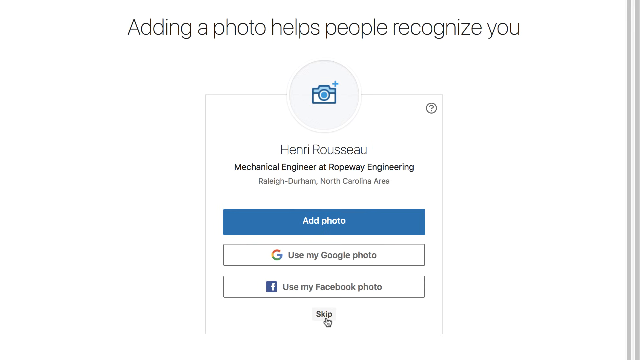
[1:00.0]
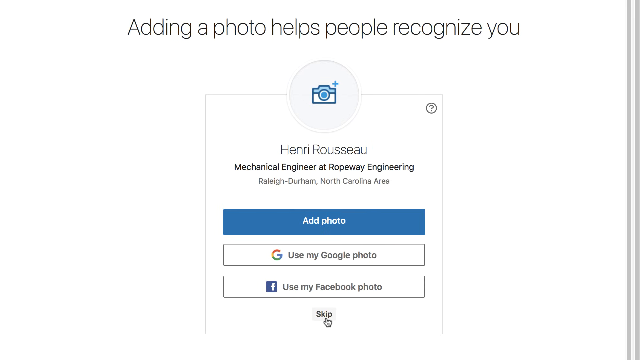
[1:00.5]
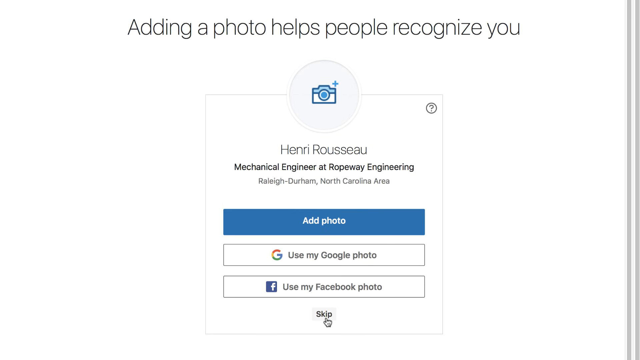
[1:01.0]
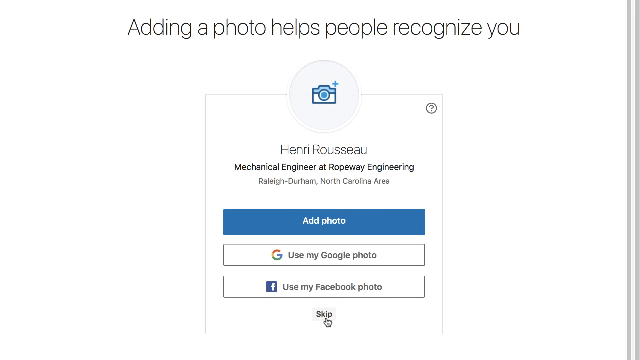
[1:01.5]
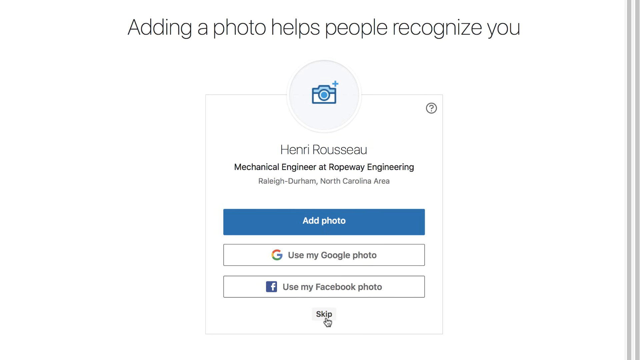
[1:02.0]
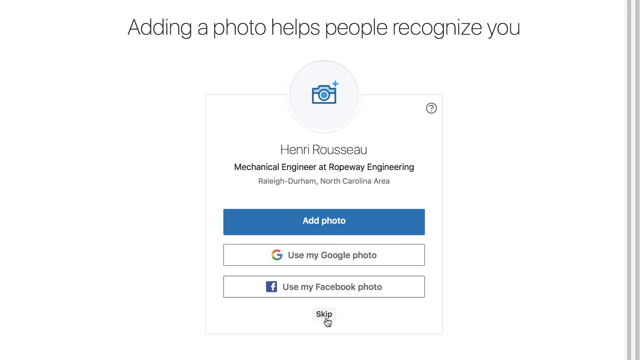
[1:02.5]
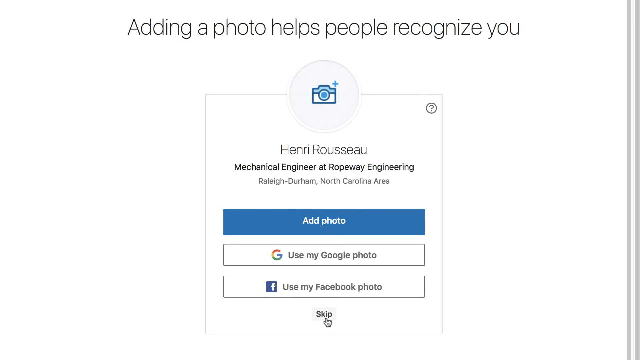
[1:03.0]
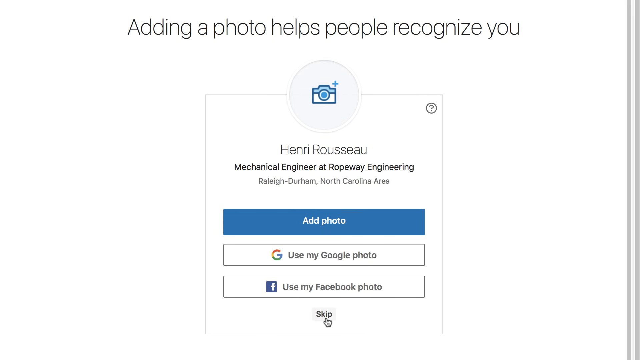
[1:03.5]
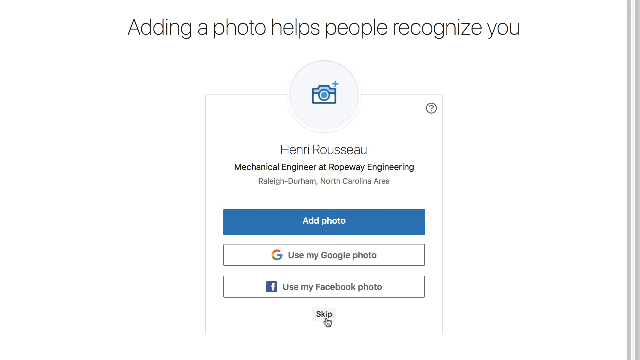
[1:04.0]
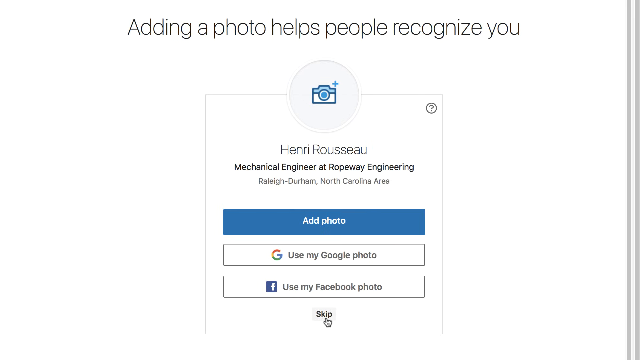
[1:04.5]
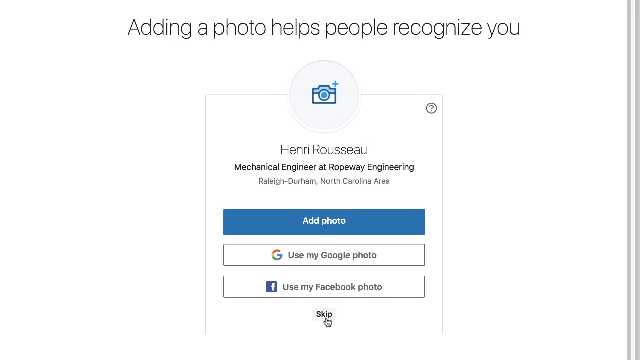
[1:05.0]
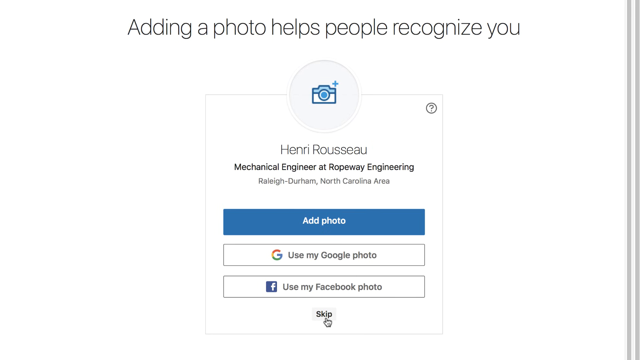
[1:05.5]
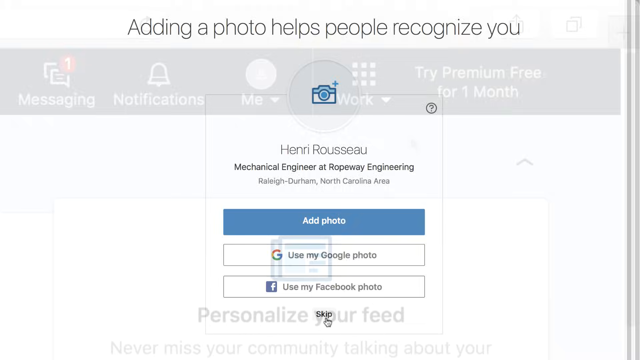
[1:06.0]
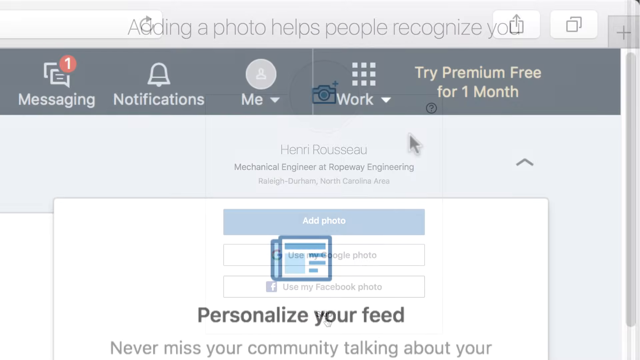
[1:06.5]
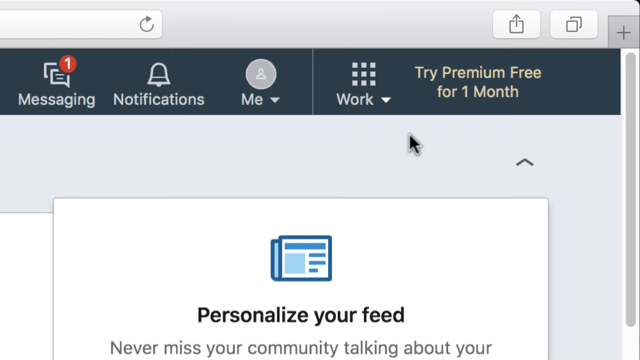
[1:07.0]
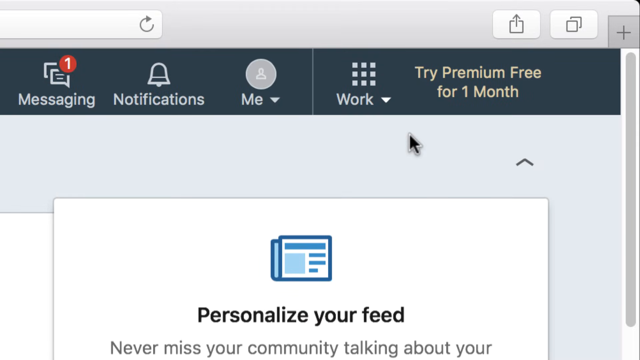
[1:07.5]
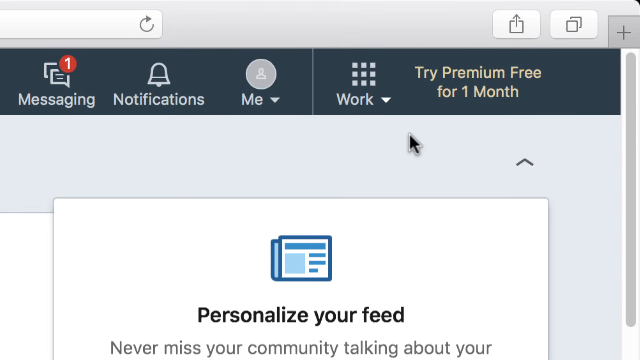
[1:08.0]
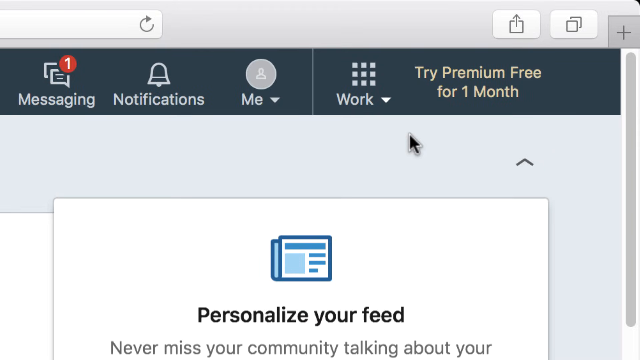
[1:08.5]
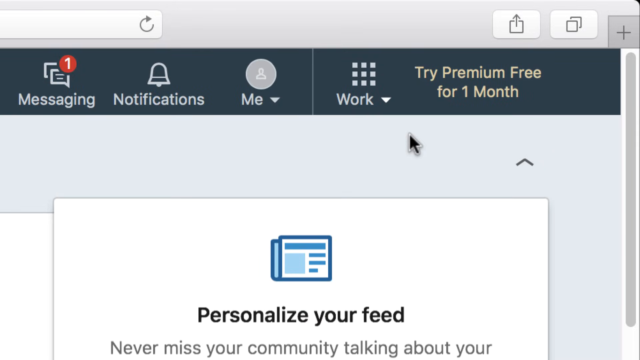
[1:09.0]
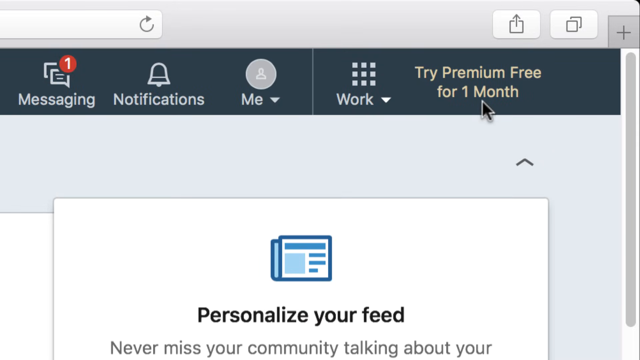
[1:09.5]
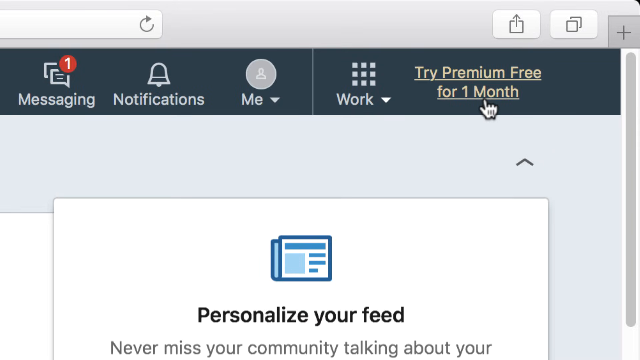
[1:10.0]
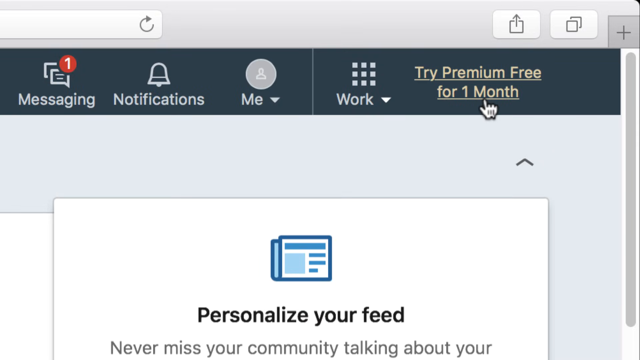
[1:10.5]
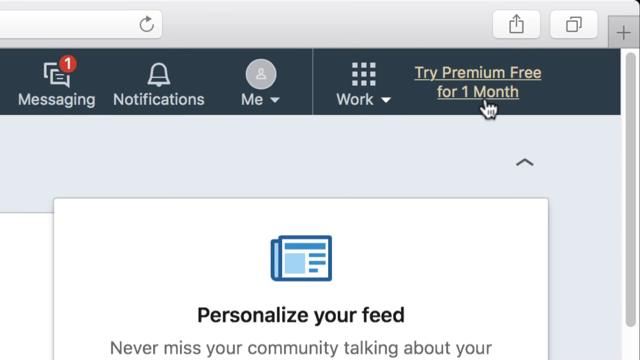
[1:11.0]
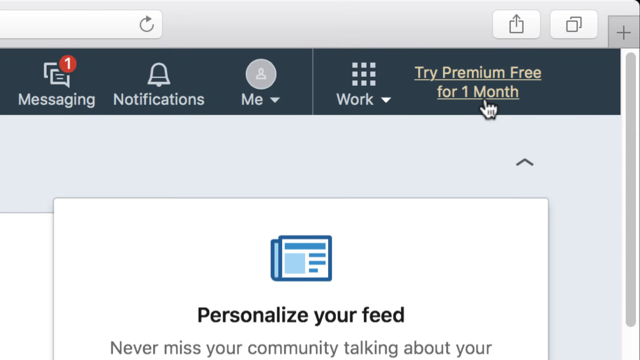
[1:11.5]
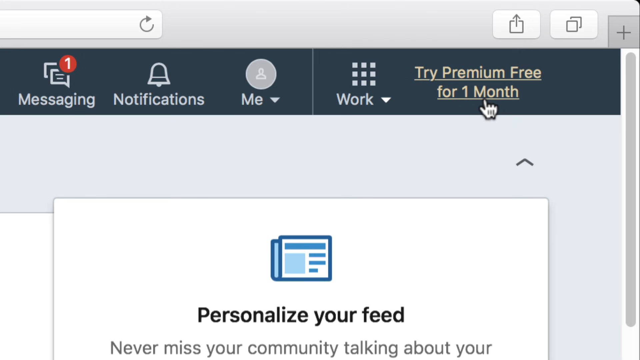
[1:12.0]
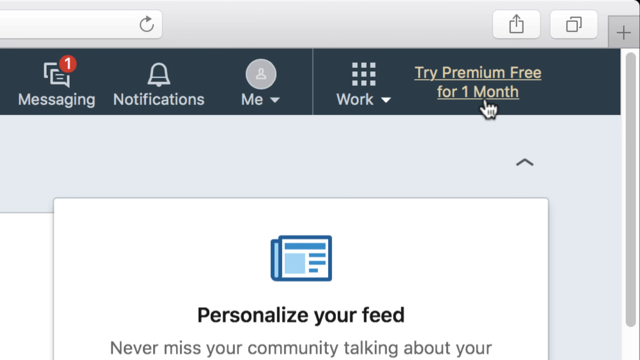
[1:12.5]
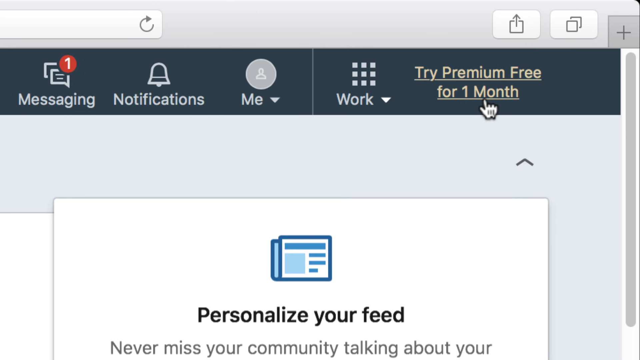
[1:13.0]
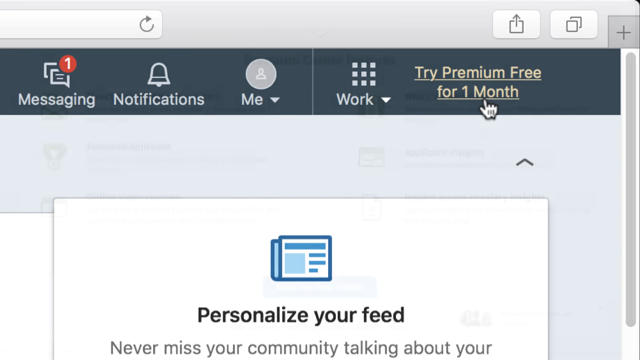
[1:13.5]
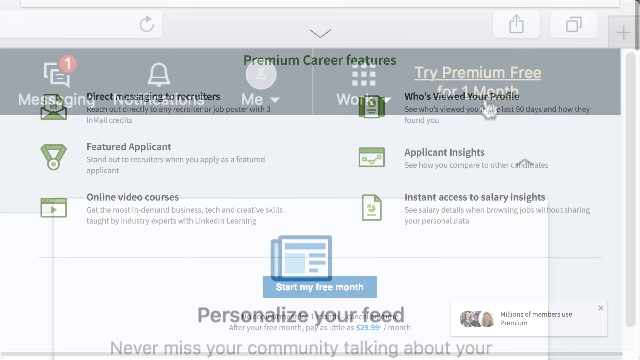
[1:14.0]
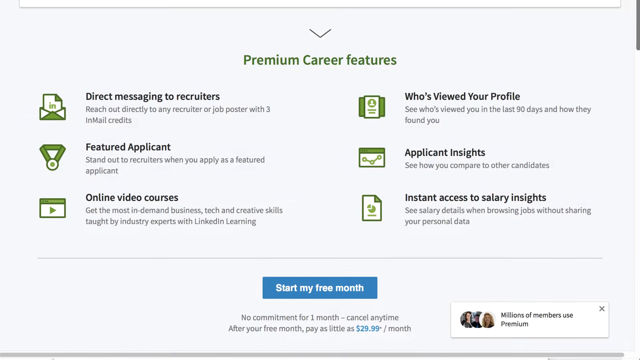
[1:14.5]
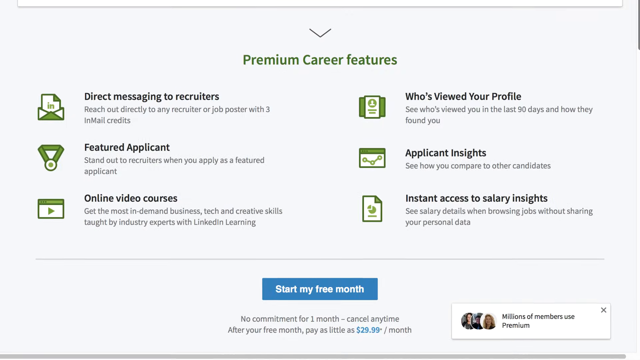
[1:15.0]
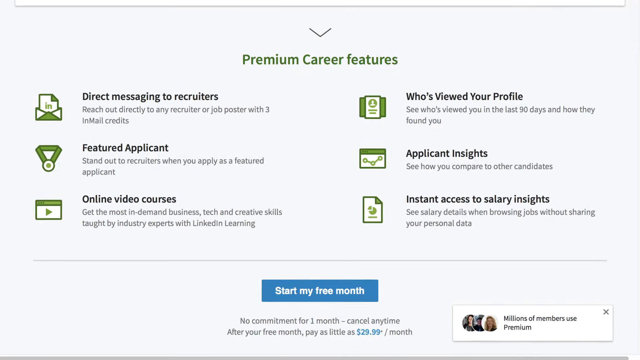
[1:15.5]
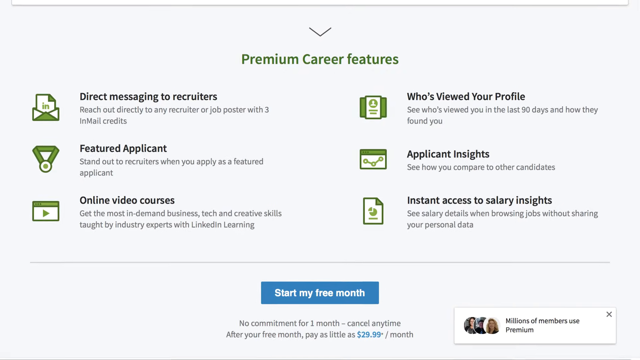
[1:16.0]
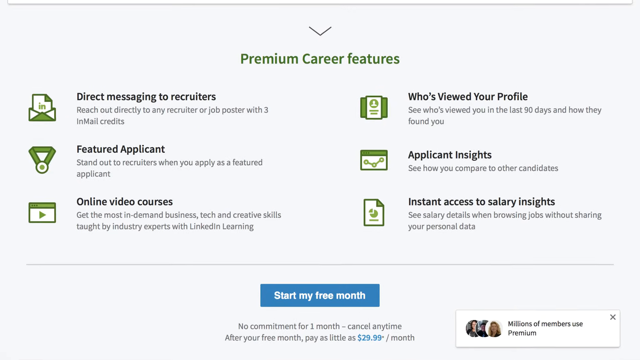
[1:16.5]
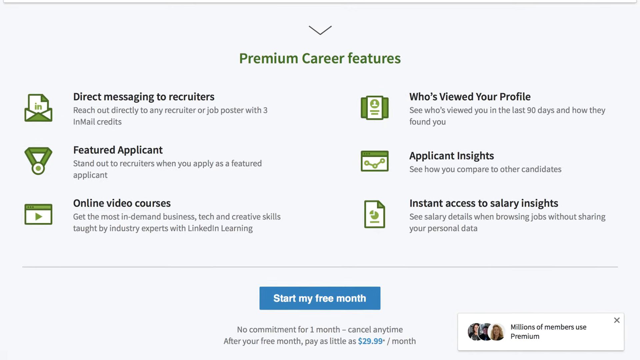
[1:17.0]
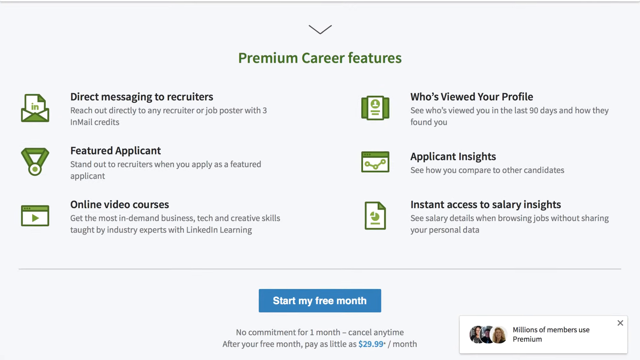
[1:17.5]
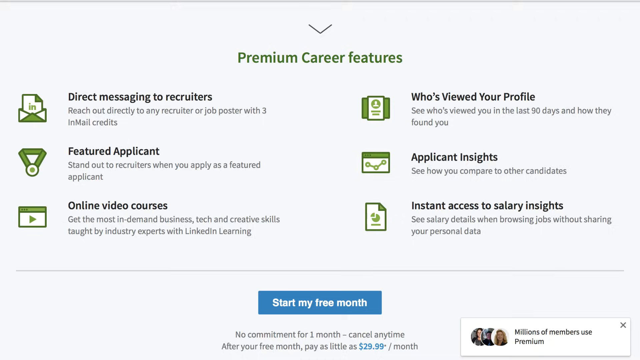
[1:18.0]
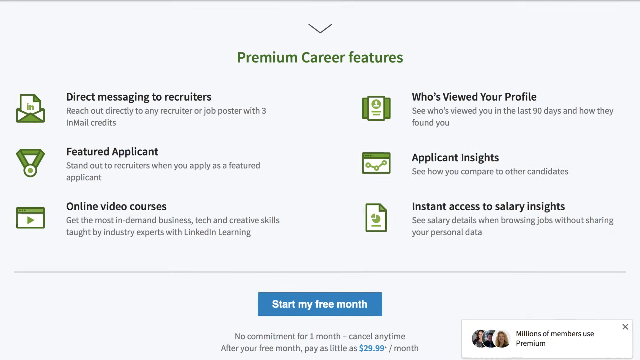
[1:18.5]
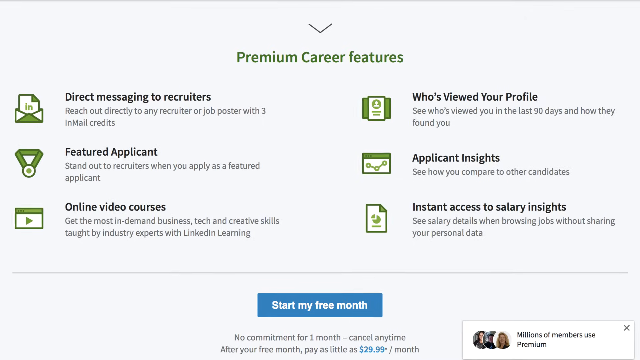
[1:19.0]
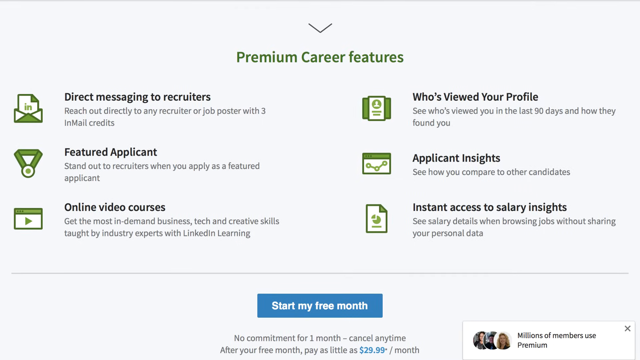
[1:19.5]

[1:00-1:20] A prompt to add a photo is shown, saying it helps others recognize the user. After that, the LinkedIn profile appears with an offer to try Premium free, listing Premium career features, with one month free followed by payment. The career features shown include direct messages to recruiters, being a featured applicant, a personalized feed, applicant insights and instant access to salary insights. An option to start Premium for free then appears, and clicking it shows all the features.